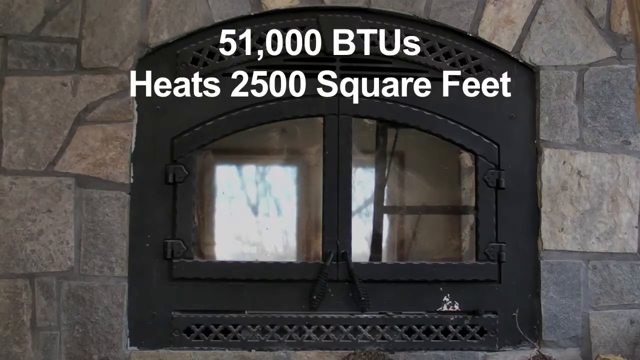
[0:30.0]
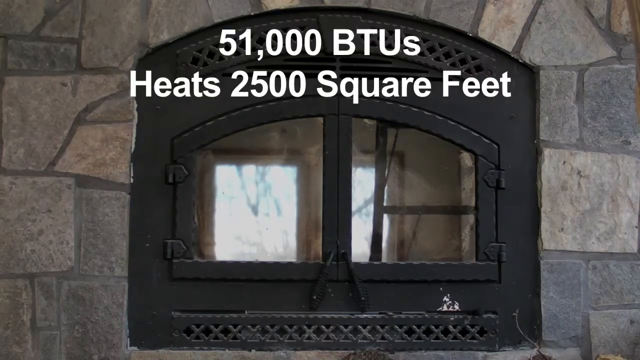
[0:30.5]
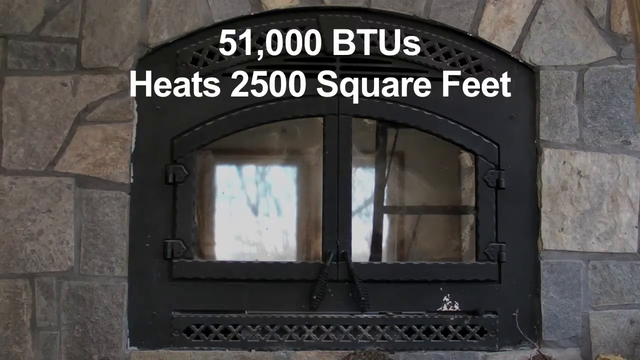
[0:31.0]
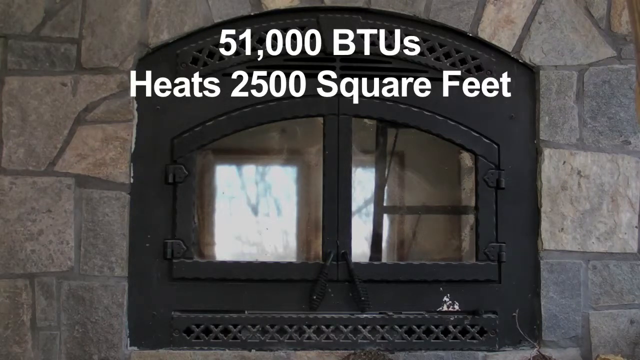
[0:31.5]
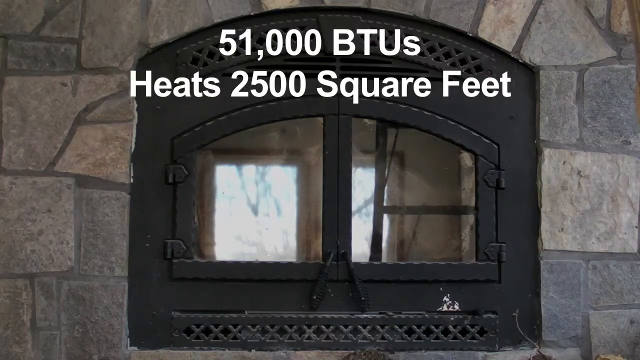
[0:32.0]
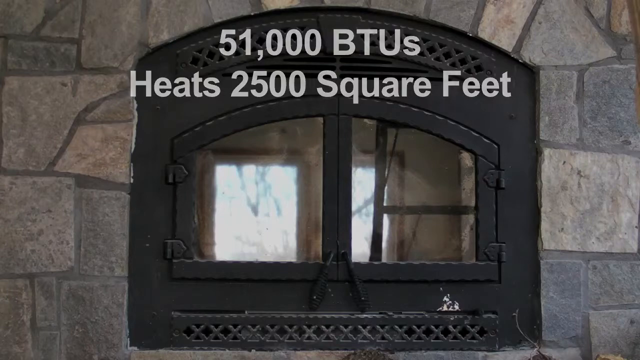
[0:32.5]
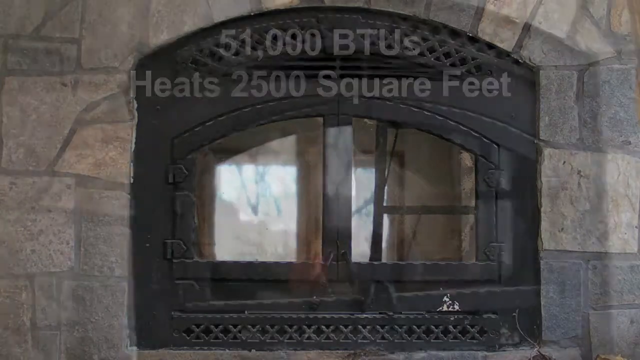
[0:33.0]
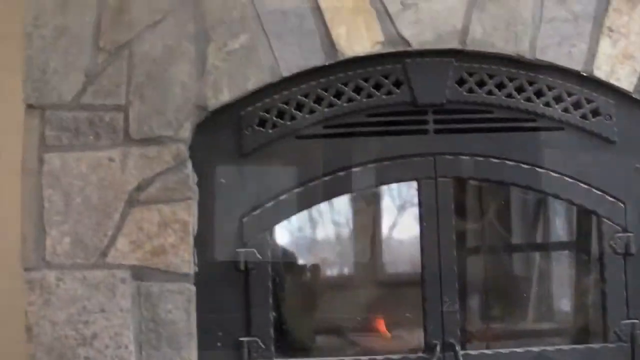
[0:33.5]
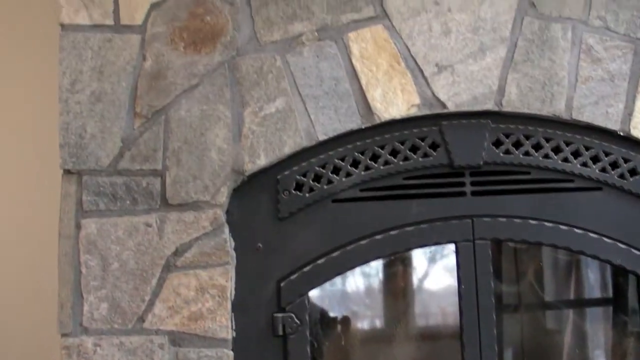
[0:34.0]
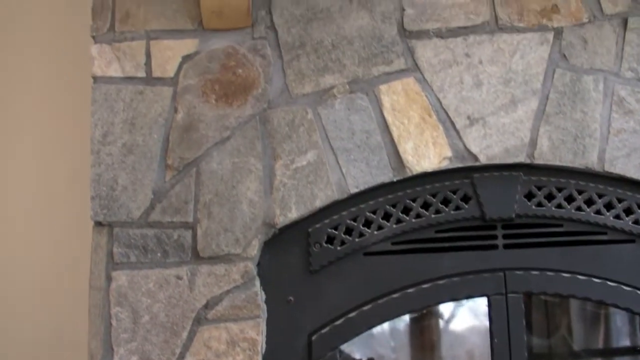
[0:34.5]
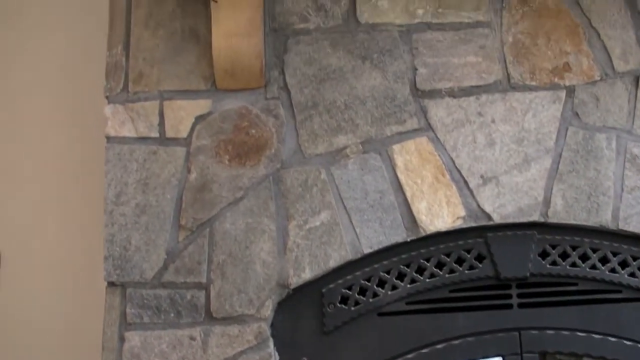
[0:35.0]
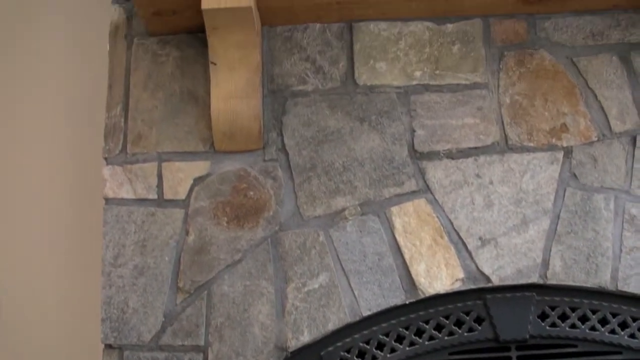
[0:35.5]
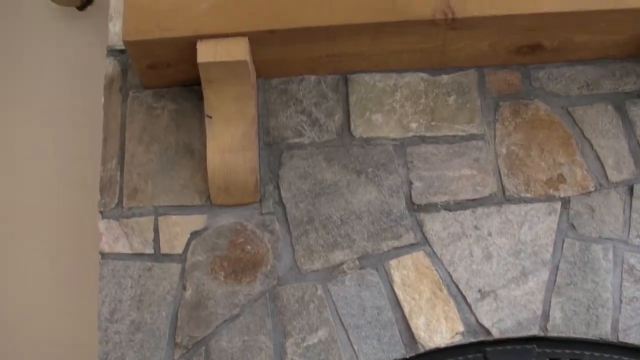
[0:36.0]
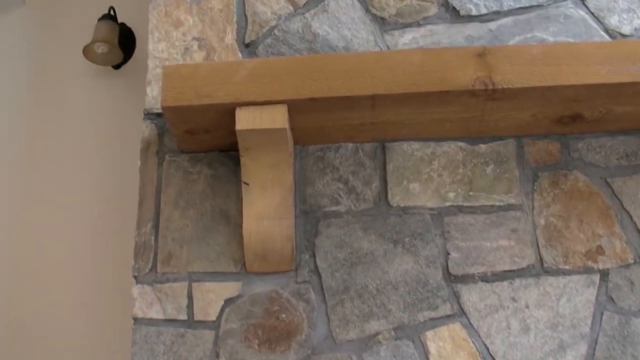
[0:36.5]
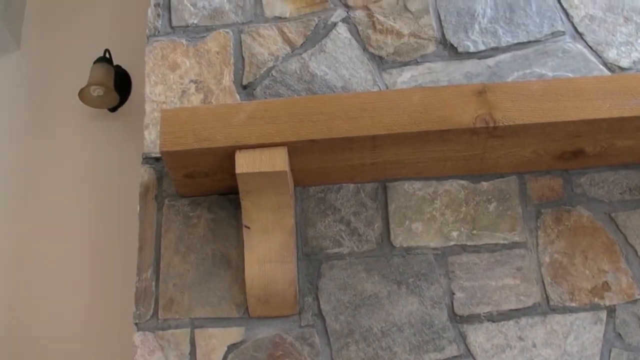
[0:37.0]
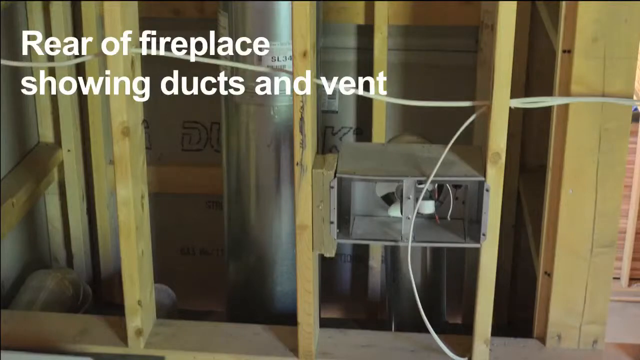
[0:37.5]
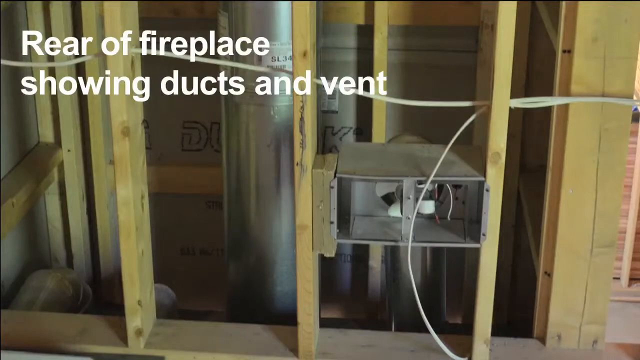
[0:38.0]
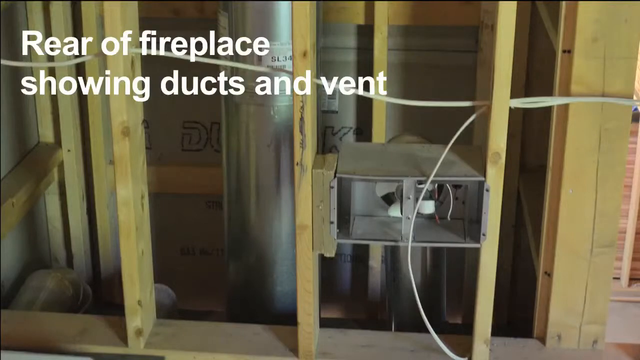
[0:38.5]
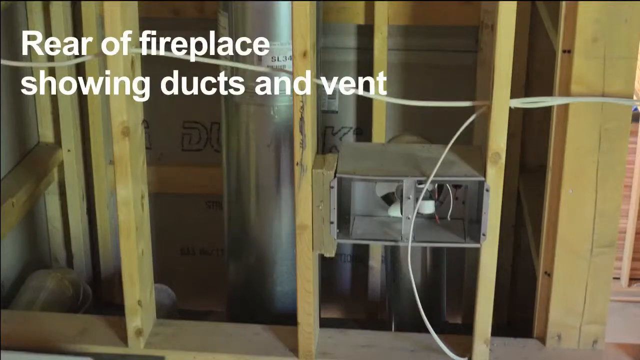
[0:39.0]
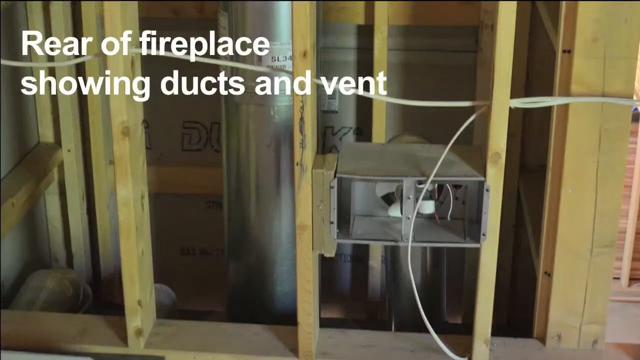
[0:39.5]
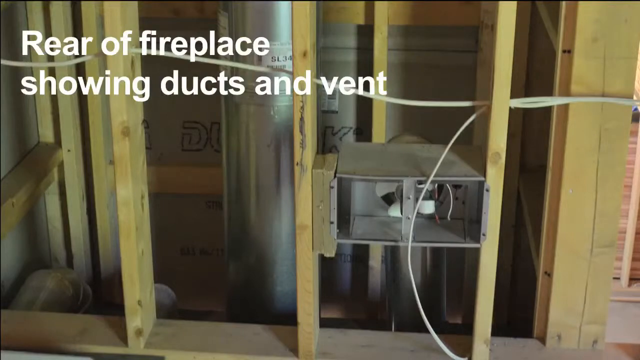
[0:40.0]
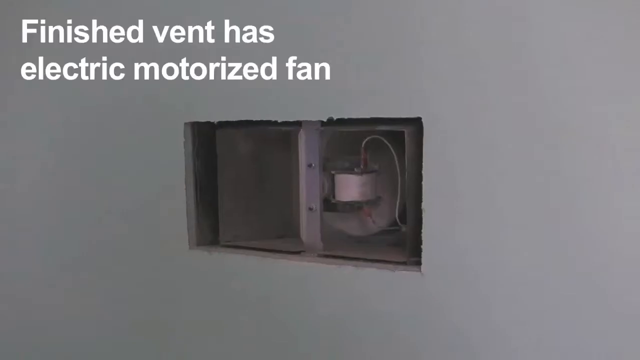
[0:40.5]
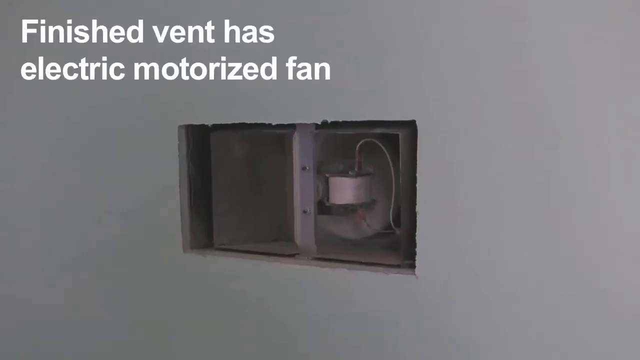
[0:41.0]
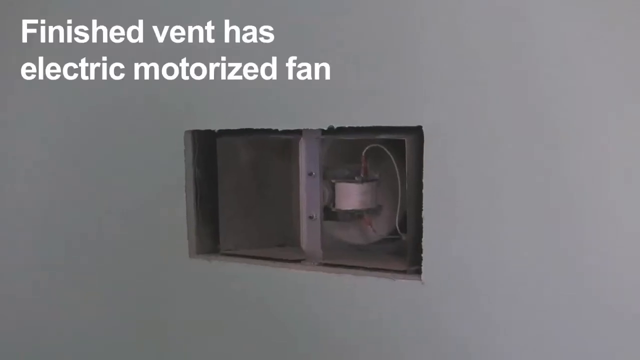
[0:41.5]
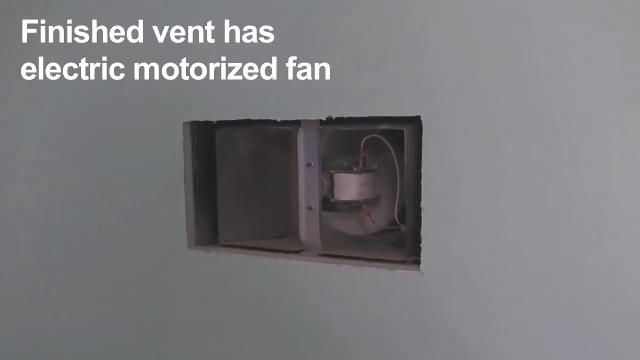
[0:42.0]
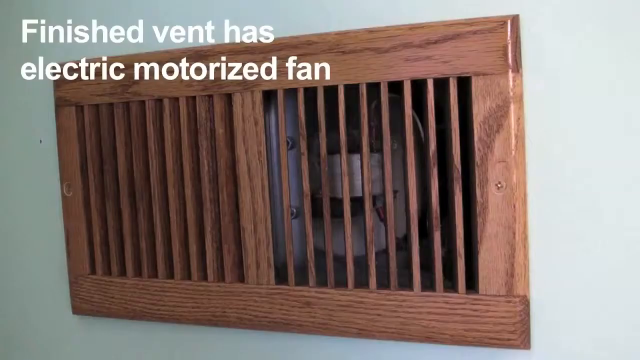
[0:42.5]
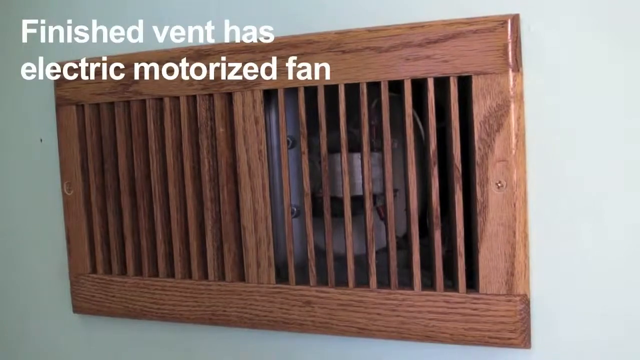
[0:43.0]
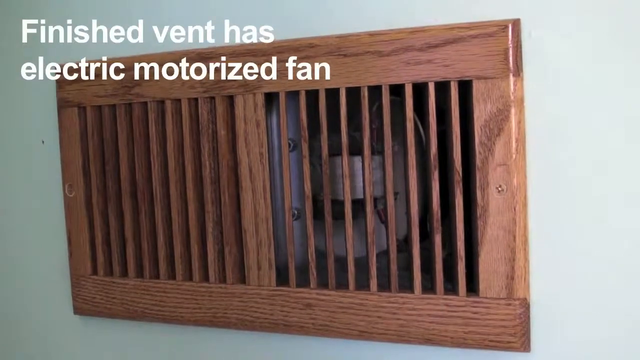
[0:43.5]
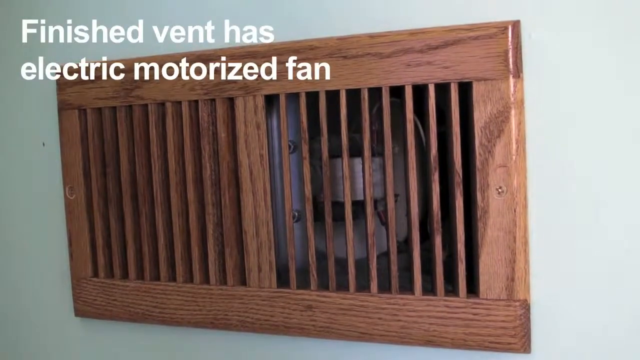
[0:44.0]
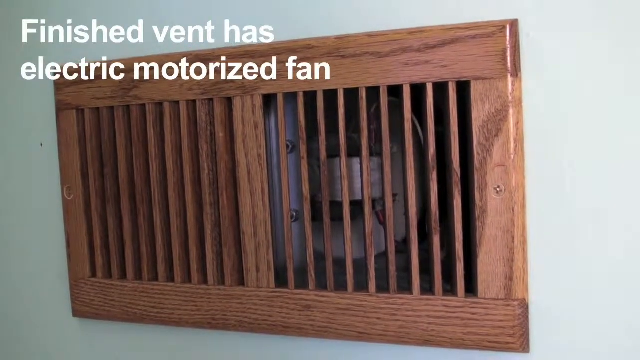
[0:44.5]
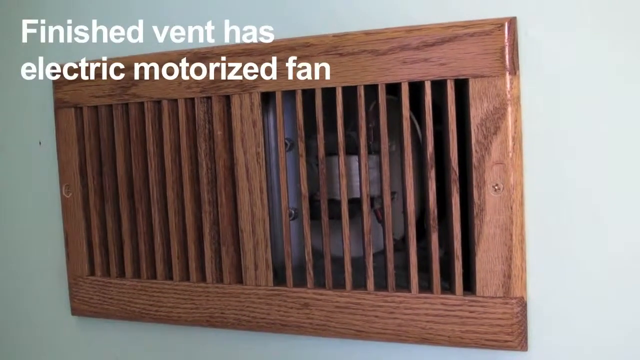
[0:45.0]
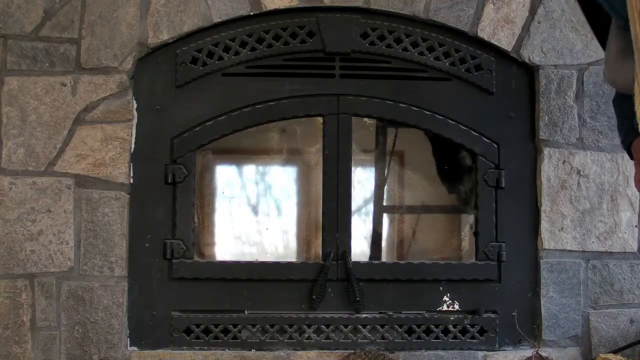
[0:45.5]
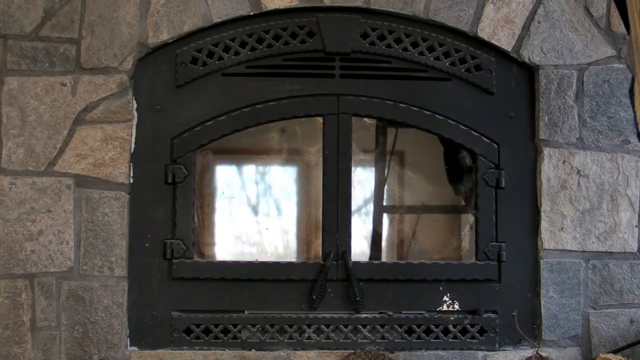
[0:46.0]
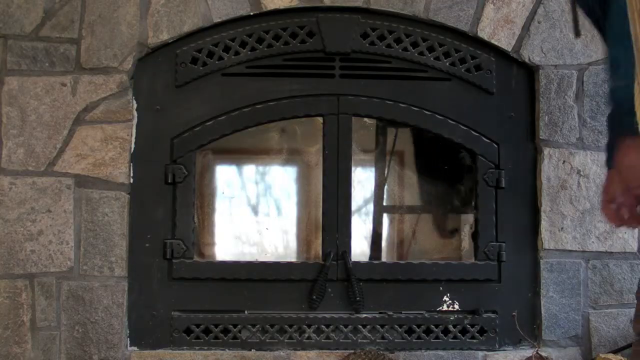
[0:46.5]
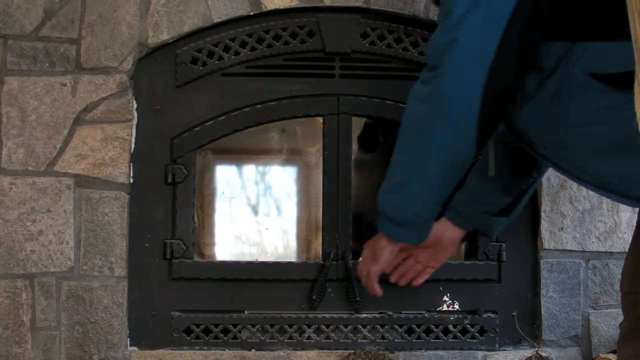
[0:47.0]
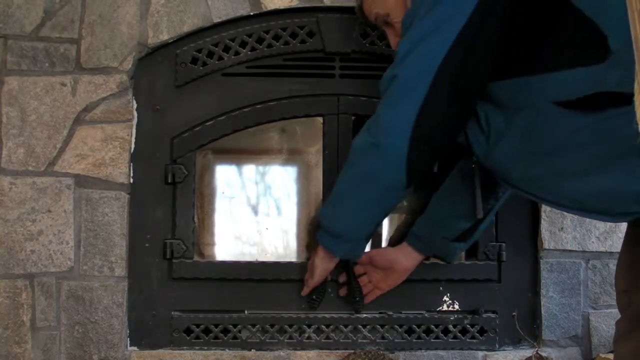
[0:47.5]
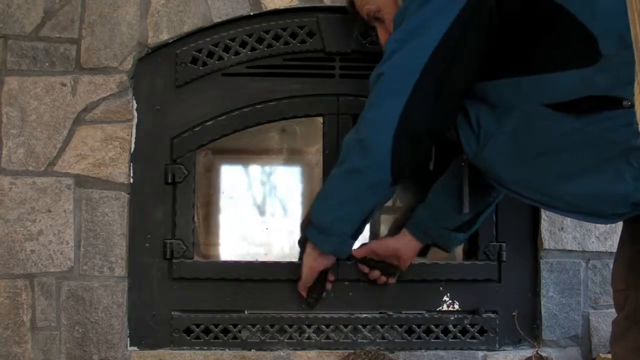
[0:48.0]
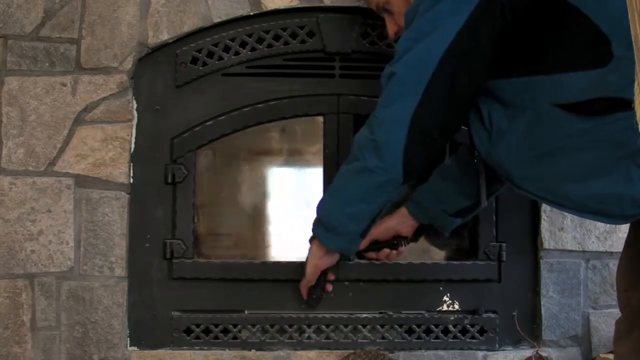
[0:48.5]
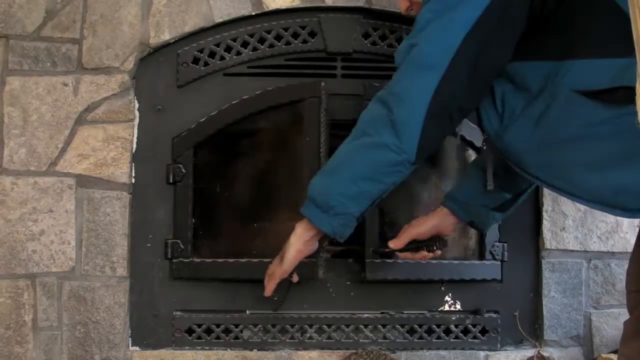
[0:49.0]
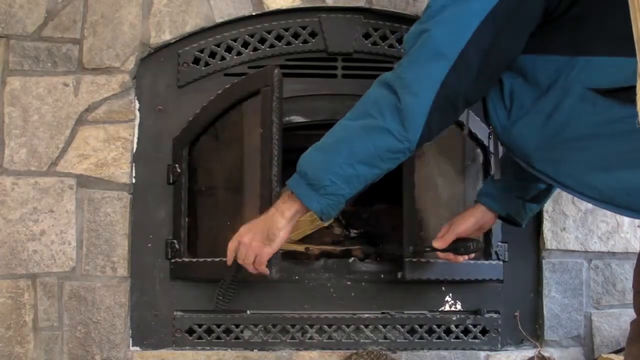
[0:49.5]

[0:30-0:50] Pictures of fireplaces are shown, including the rear of a fireplace with taps and vents fitted to it. A finished vent is then shown, labeled as an electric motorized vent, and the video shows how the vent is done. It then shows how the fireplace opens: it has glass, looks like it is stuck on the wall, and is in a neat room. The ducts and vents are put in on the wall while the fireplace is being installed.